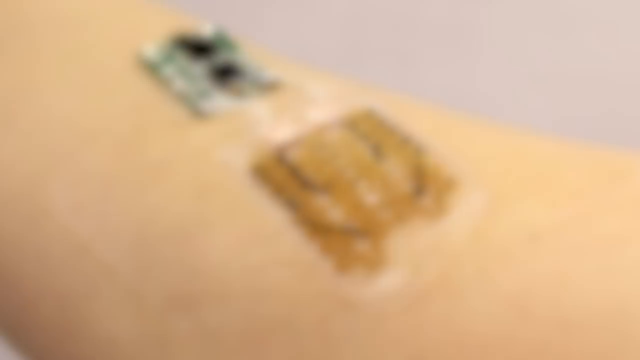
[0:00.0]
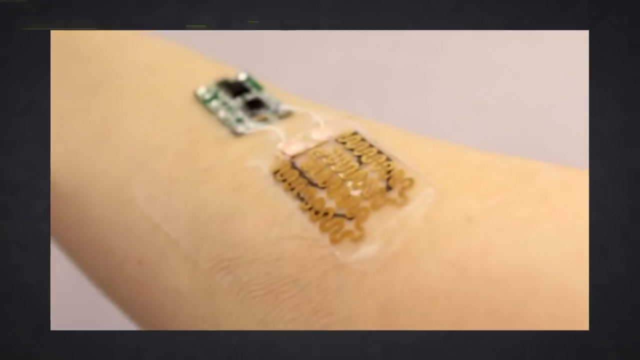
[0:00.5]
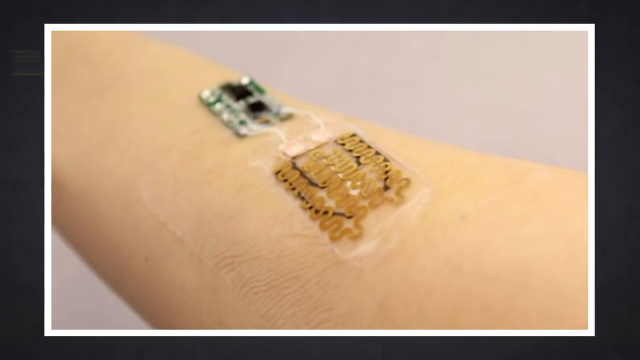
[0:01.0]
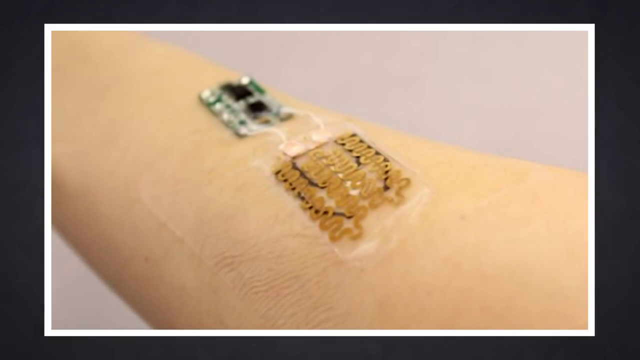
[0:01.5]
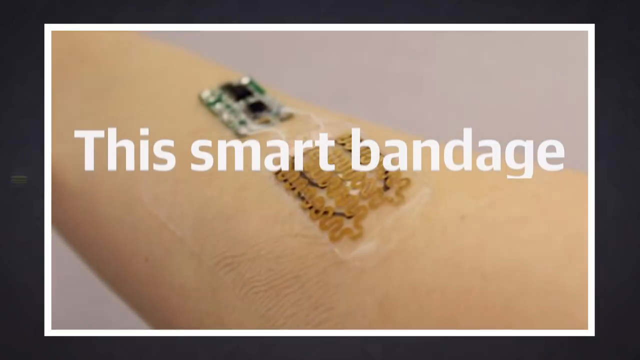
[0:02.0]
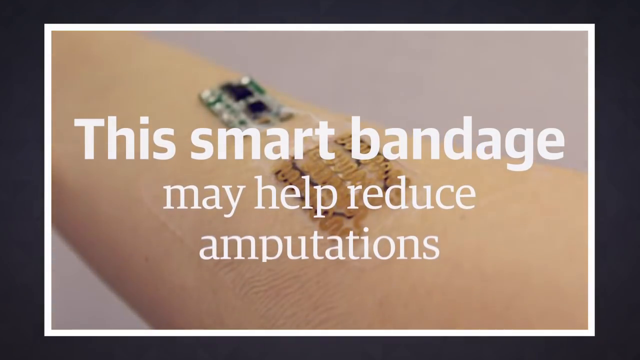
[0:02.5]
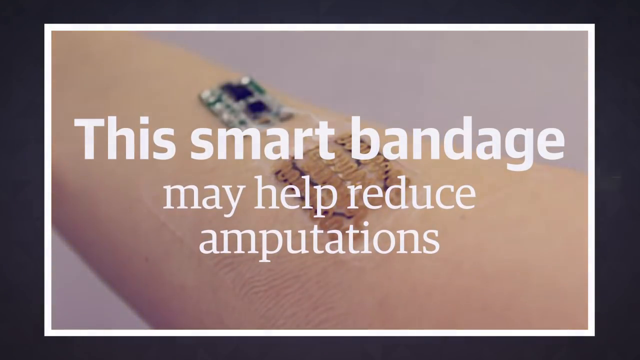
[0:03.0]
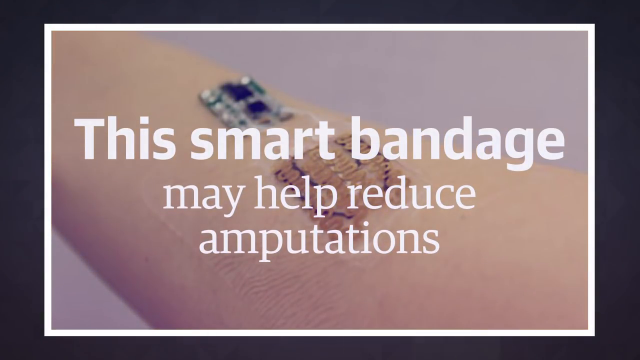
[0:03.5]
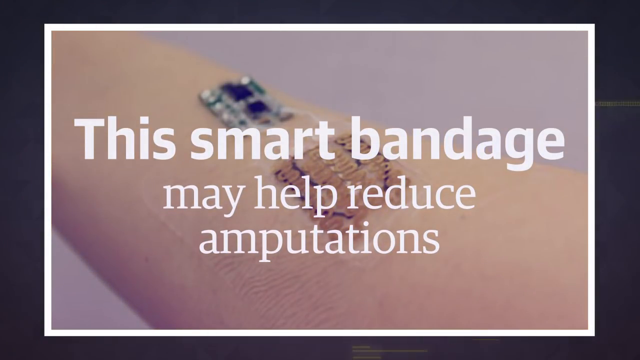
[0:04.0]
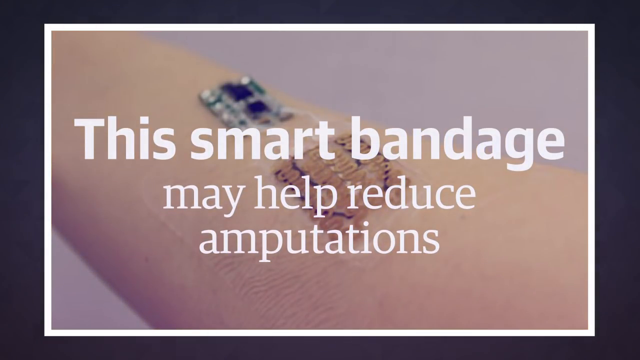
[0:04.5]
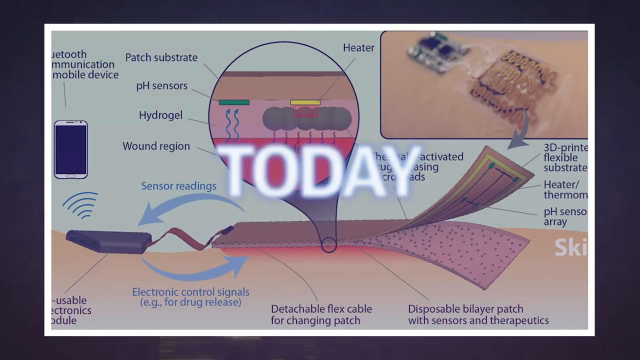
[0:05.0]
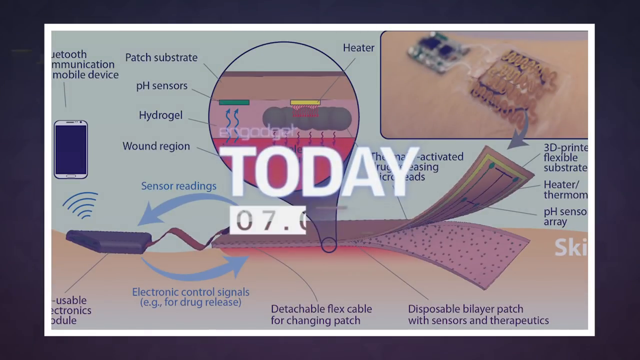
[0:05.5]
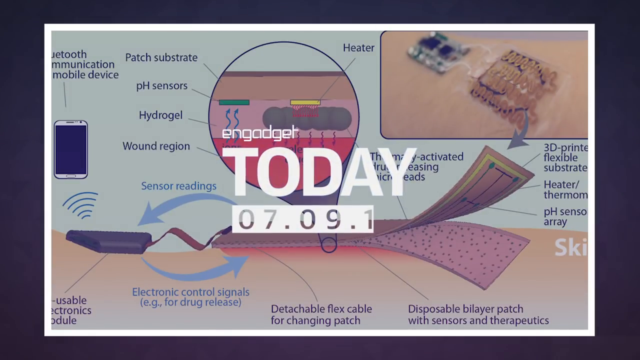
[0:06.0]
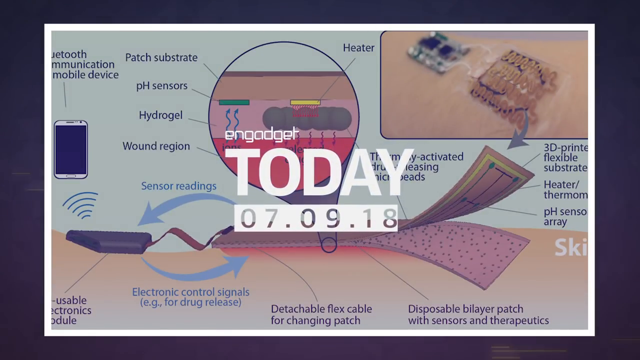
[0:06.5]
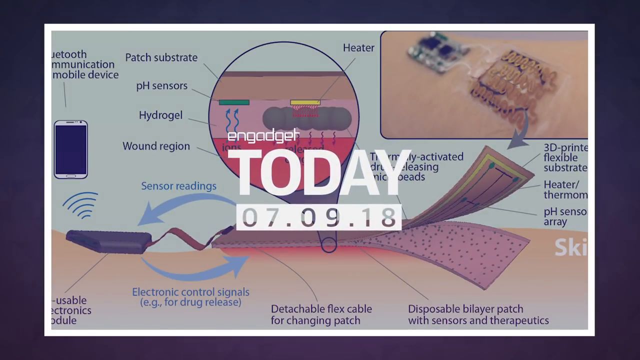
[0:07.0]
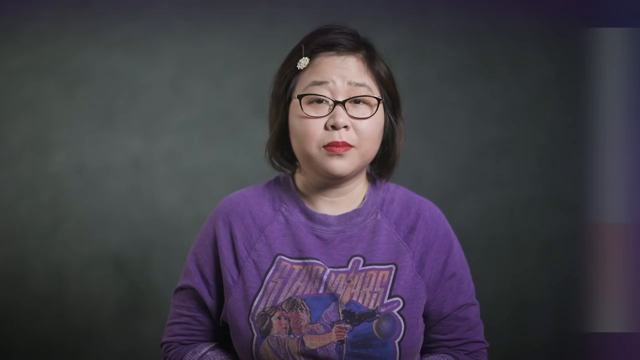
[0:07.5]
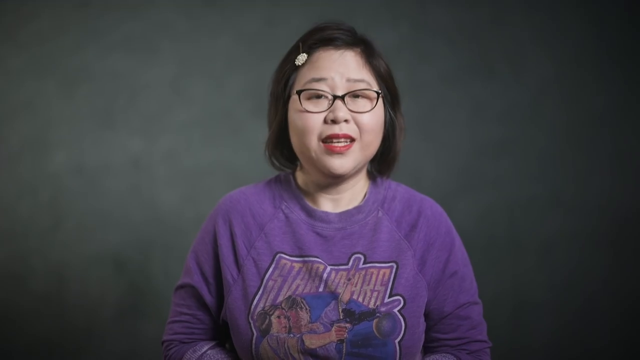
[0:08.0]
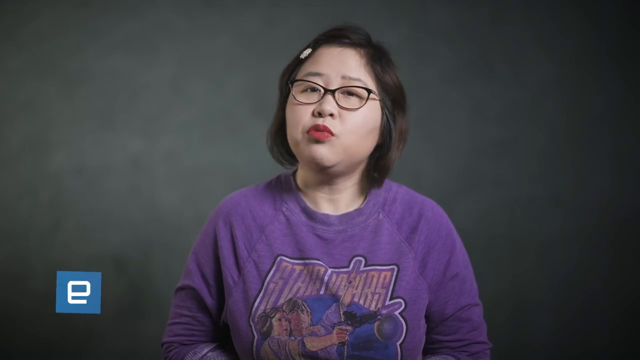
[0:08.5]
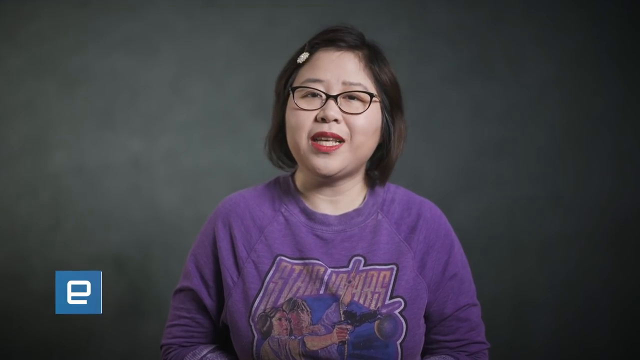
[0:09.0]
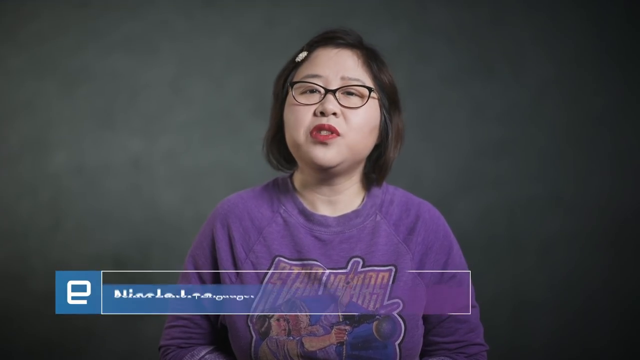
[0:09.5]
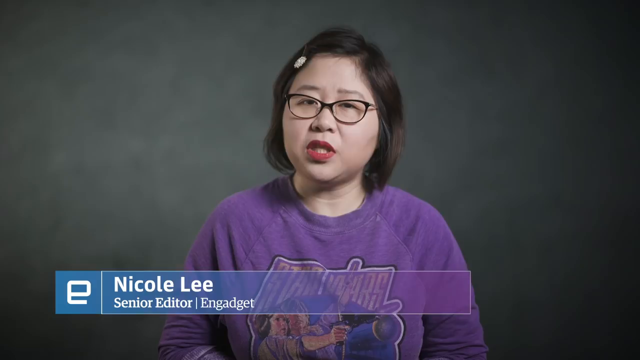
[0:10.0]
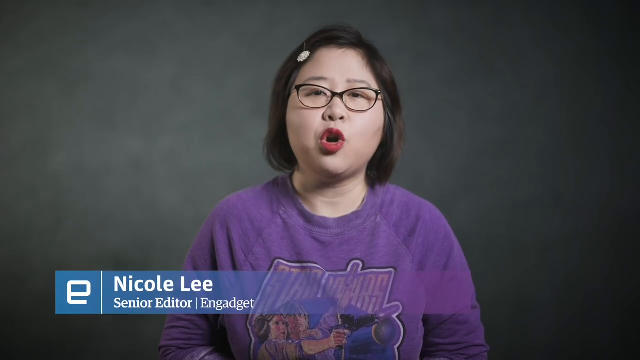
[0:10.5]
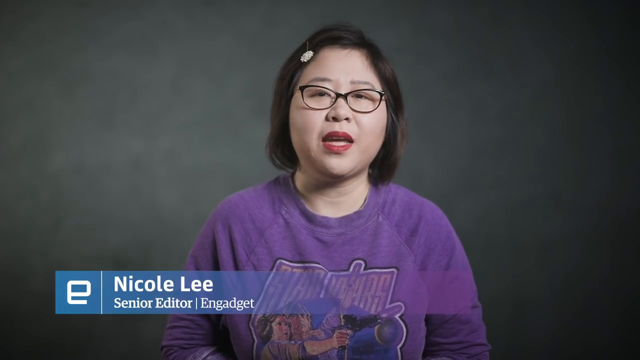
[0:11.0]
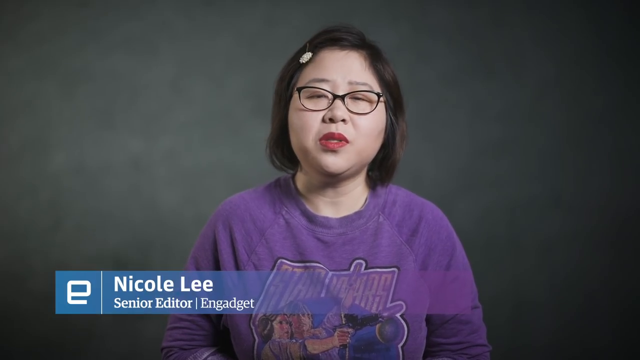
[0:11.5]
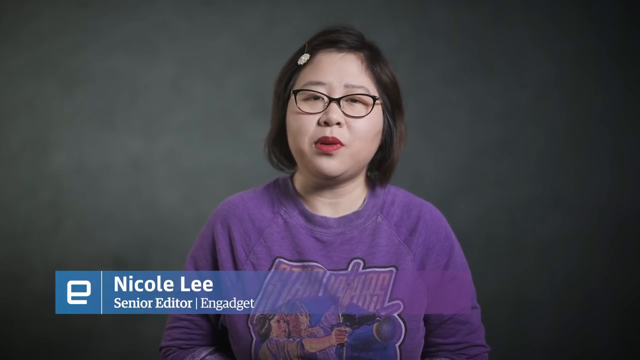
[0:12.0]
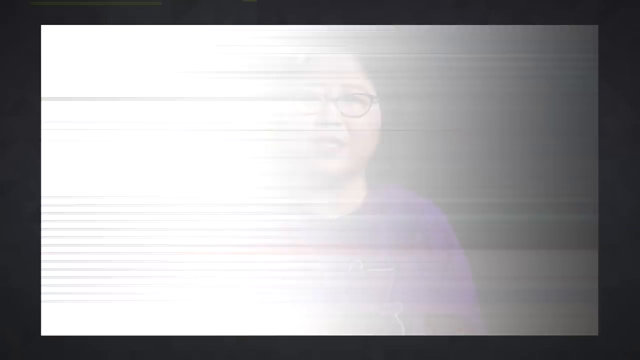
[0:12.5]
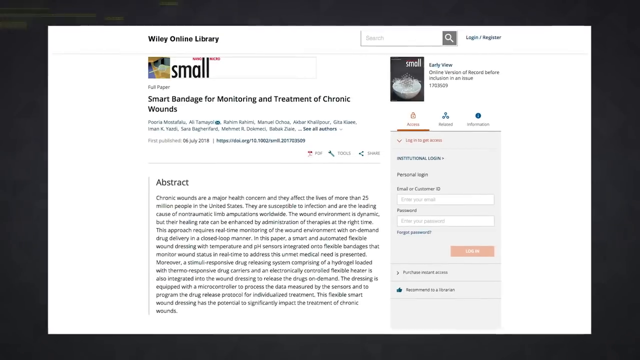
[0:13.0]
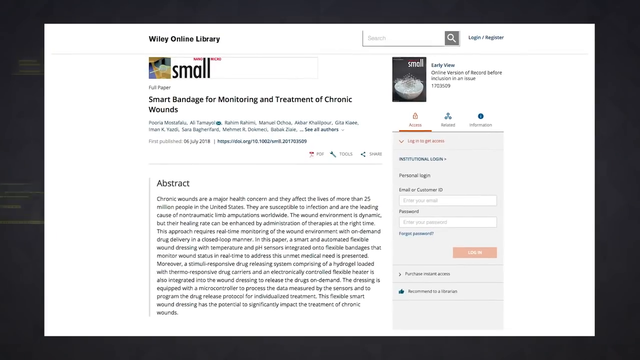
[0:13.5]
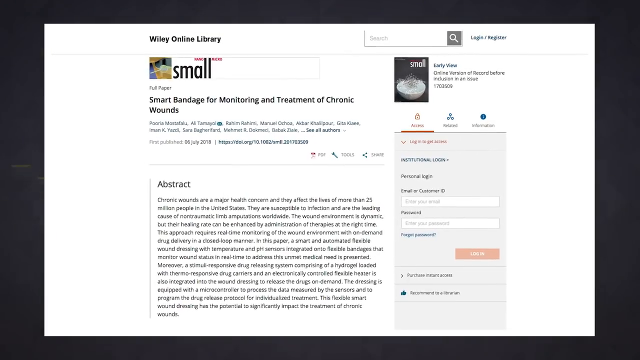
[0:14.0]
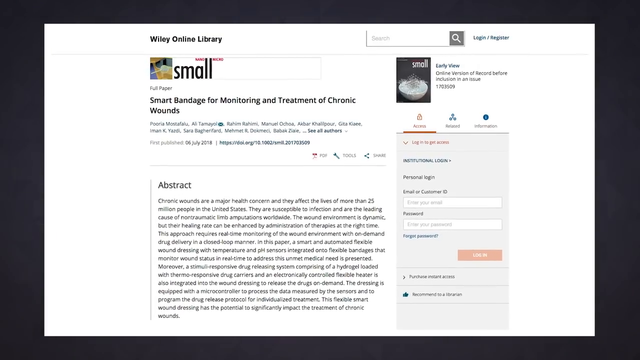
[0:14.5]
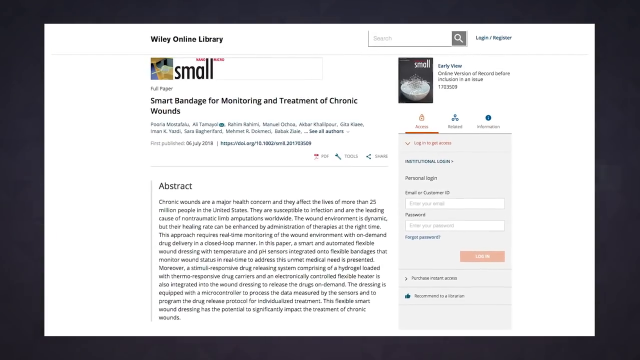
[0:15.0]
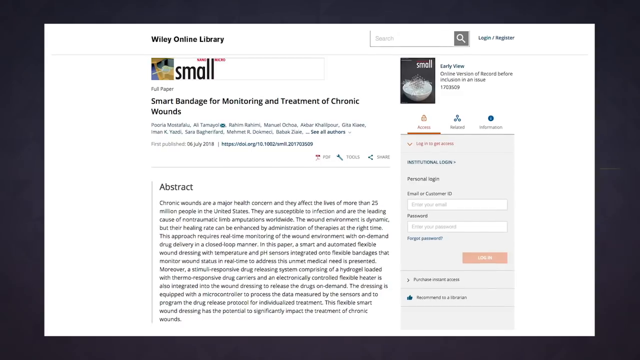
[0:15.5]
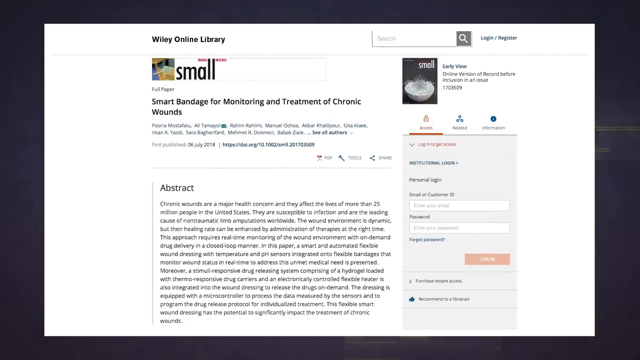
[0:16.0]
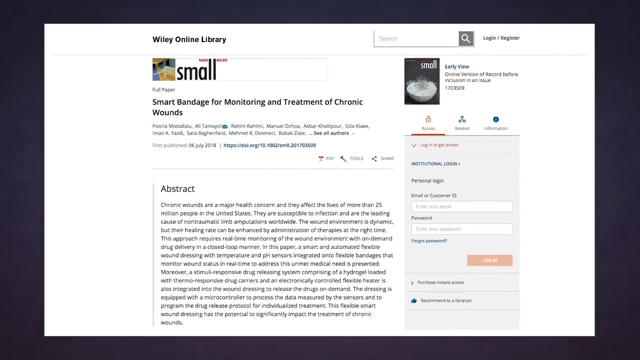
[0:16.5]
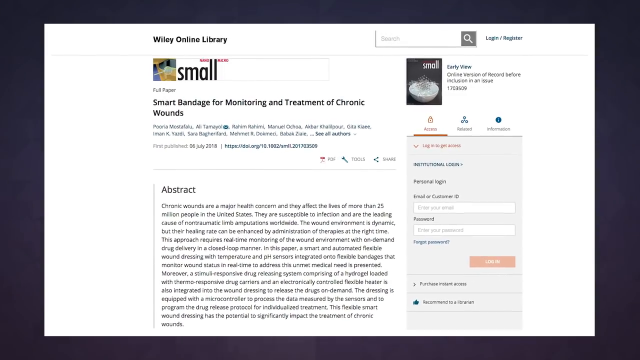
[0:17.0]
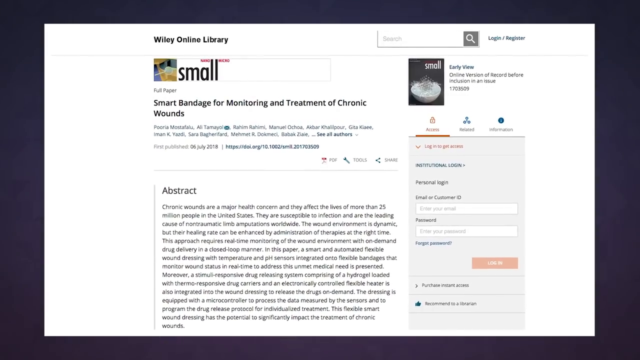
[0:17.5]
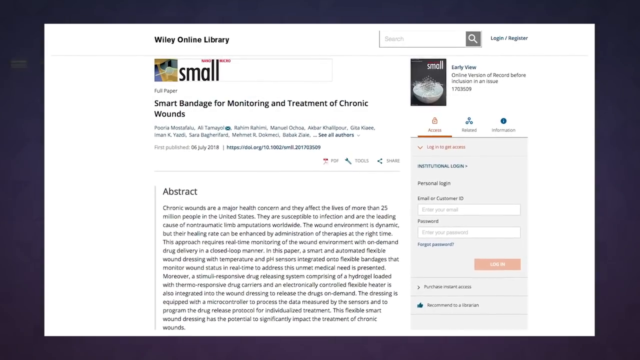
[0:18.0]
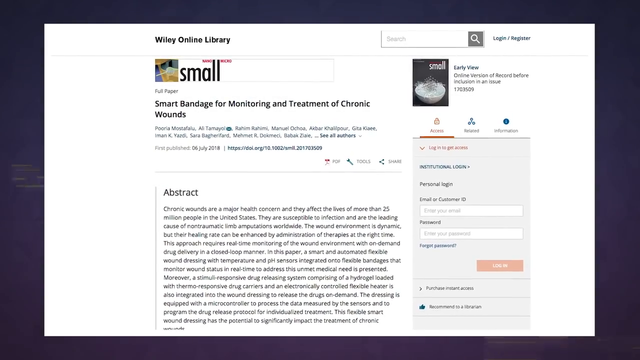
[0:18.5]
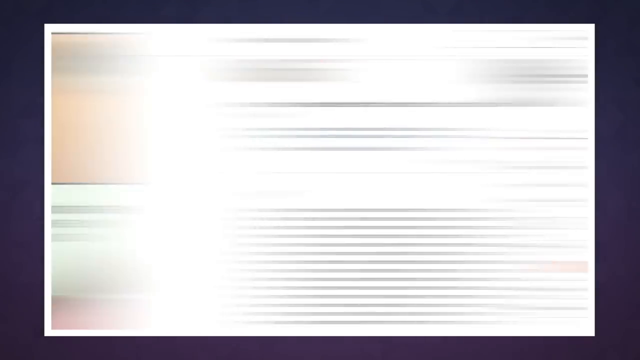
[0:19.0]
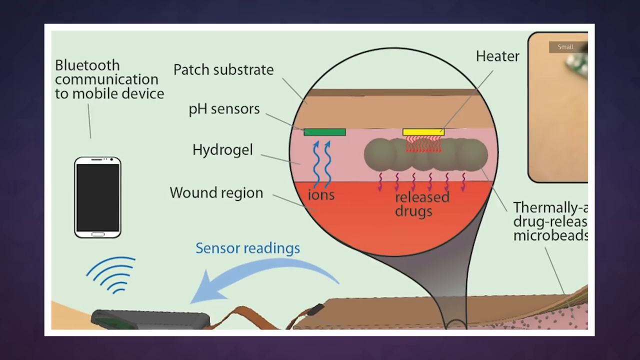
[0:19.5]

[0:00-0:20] This medical video opens with a view of a futuristic-looking patch on someone's skin, with gold coils and what almost looks like a computer chip attached at the bottom. Text reads "this smart bandage may help reduce amputations." A graphic of how the patch works appears in the background, and a date comes up in the center of the screen: "end gadget today, July 9th, 2018." A graphic then lists various items, "Bluetooth communication mobile device, patch substrate, pH sensors, hydro gel, wound region, sensor readings," showing the parts of the patch and the layers of skin to illustrate how it works. The video transitions to an Asian woman with black glasses and a purple shirt, in center frame with a gray background behind her. Text reads "end gadget, Nicole Lee, senior editor, end gadget," and the shot focuses on her. Next, what appears to be a medical journal entry is shown, with an abstract listed below. The paper's header reads "smart bandage for monitoring and treatment of chronic wounds," followed by a list of doctors on the paper, and the camera continues to zoom in on it. Various graphics about how the patch works follow.